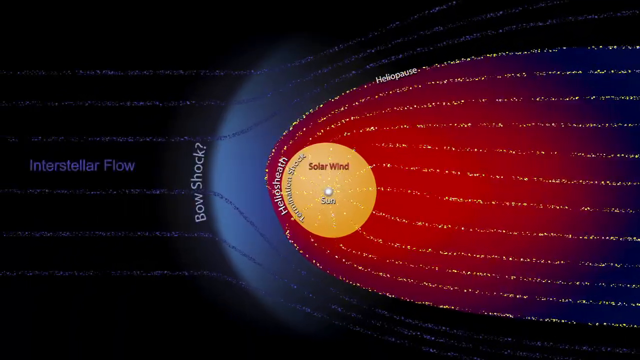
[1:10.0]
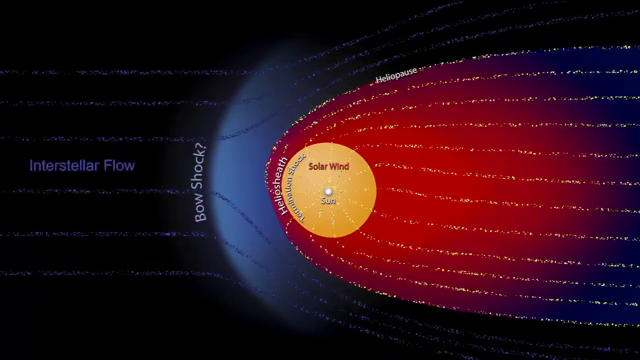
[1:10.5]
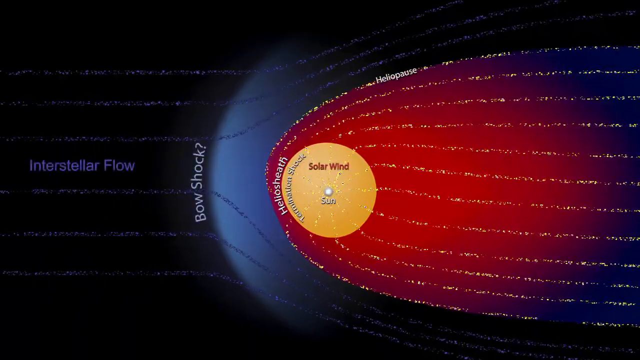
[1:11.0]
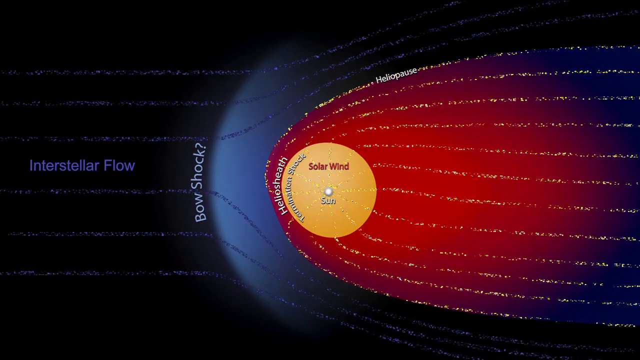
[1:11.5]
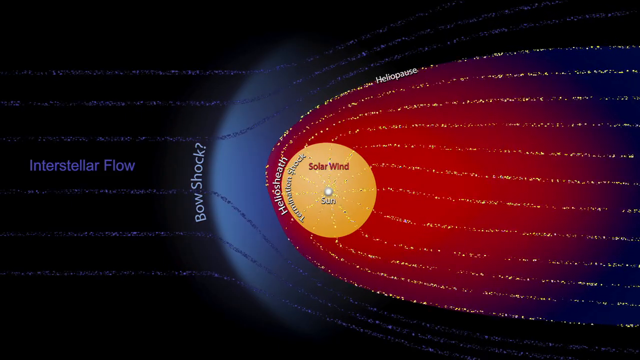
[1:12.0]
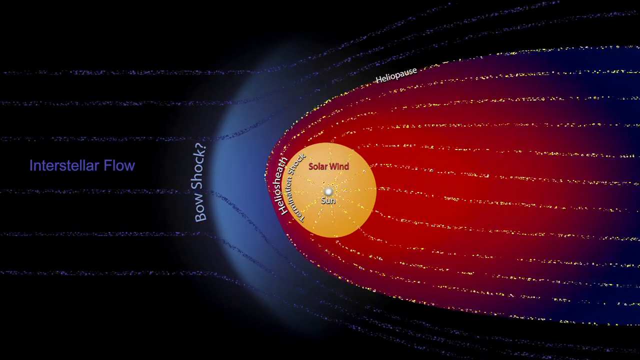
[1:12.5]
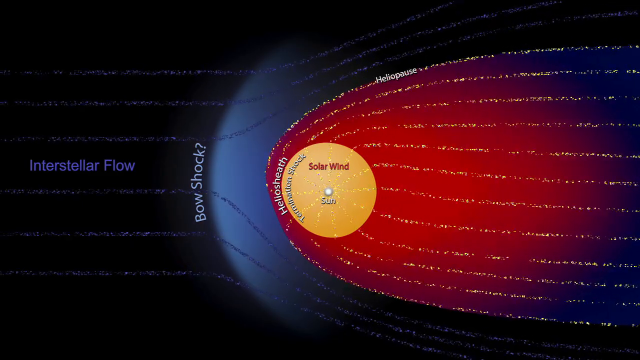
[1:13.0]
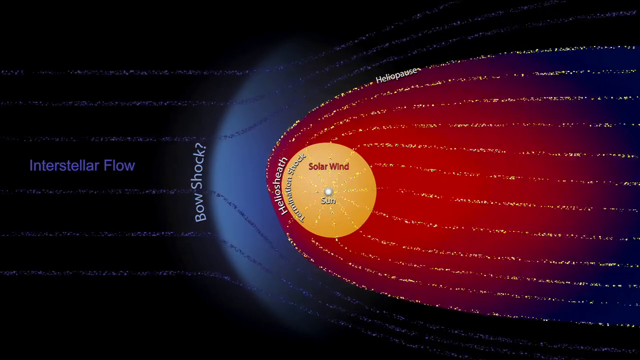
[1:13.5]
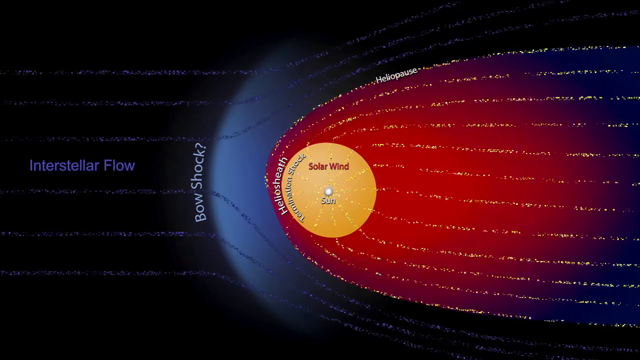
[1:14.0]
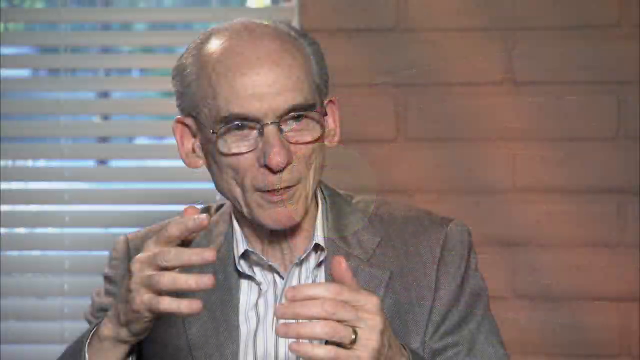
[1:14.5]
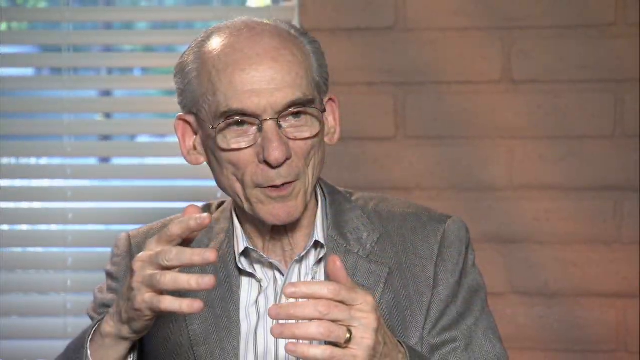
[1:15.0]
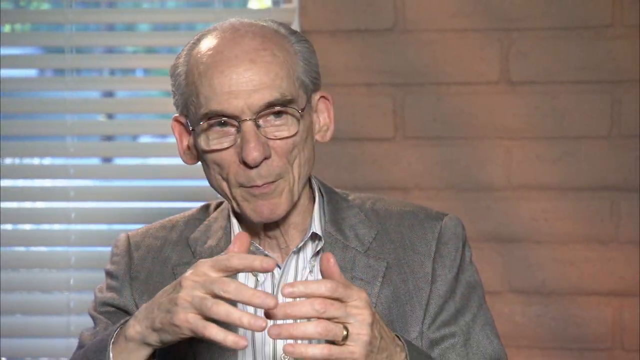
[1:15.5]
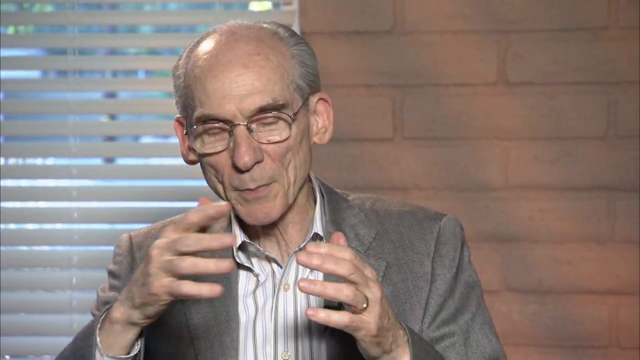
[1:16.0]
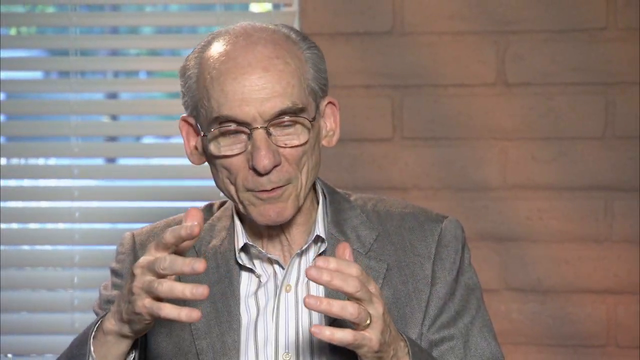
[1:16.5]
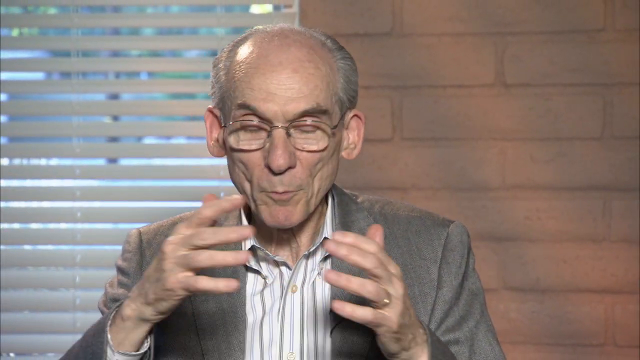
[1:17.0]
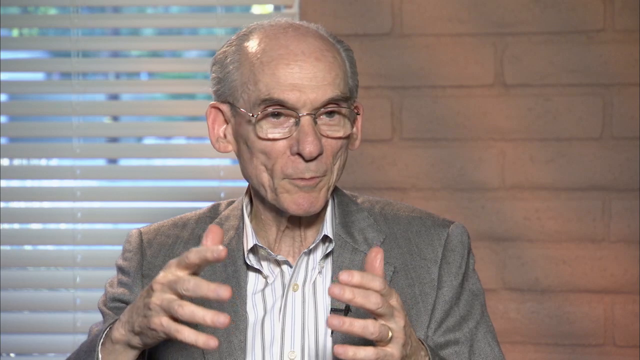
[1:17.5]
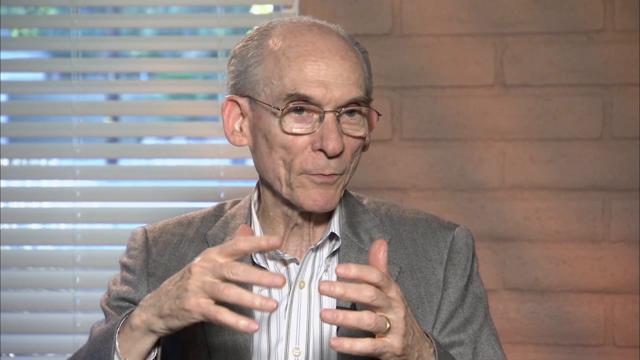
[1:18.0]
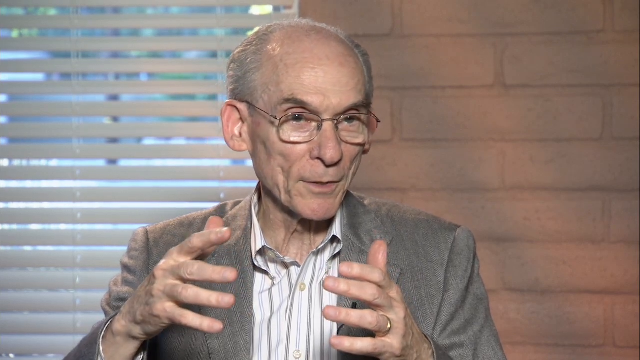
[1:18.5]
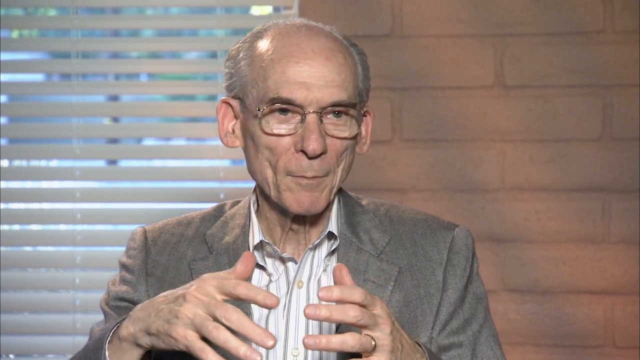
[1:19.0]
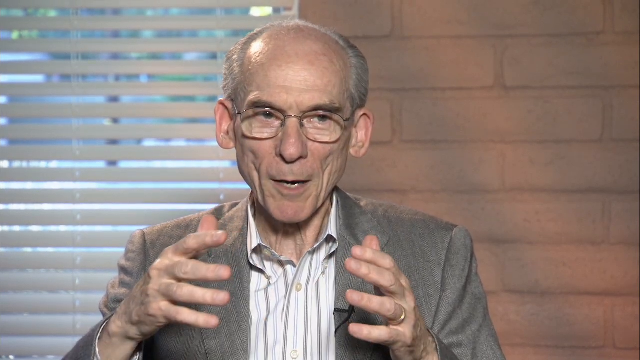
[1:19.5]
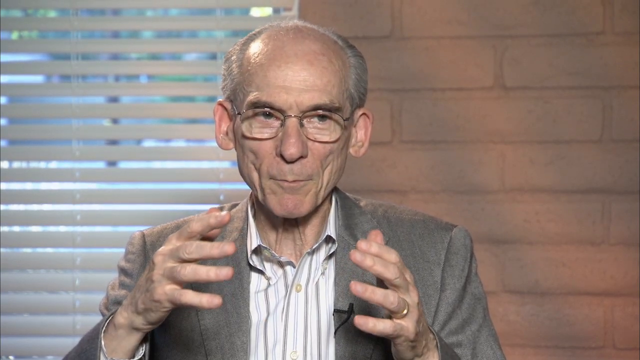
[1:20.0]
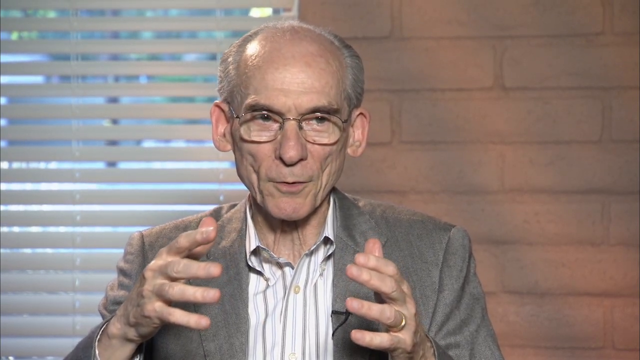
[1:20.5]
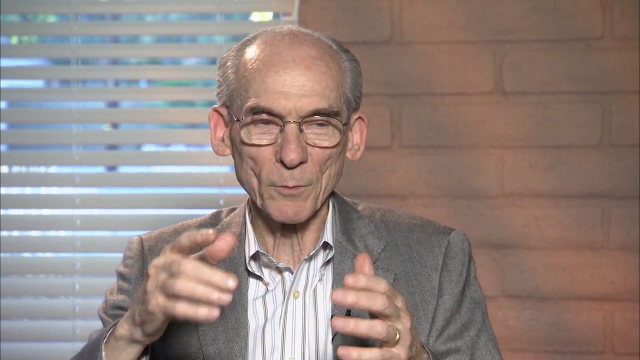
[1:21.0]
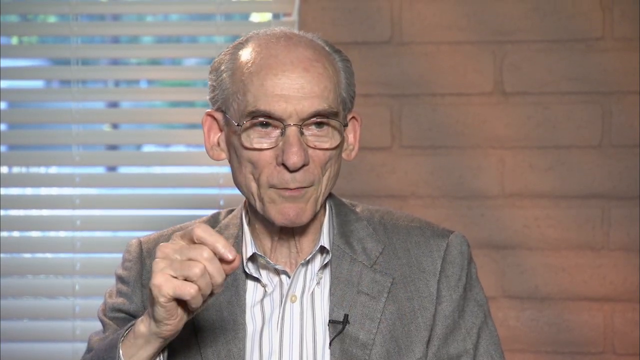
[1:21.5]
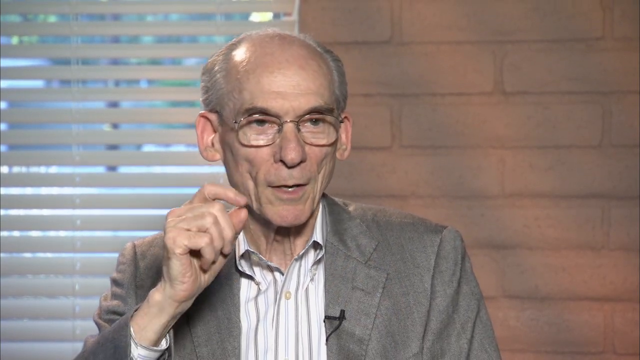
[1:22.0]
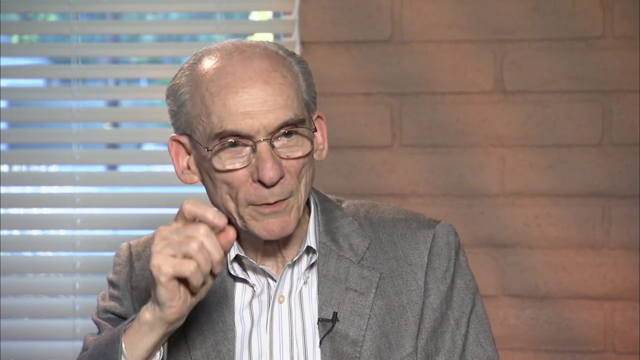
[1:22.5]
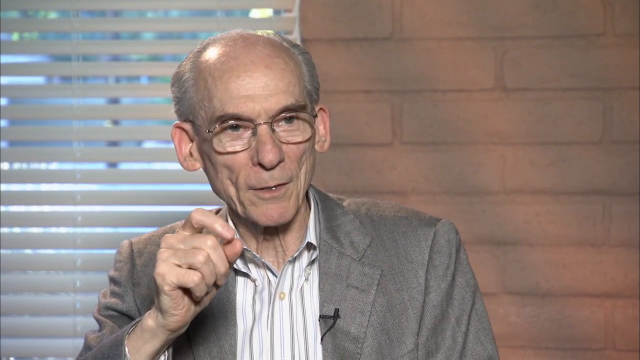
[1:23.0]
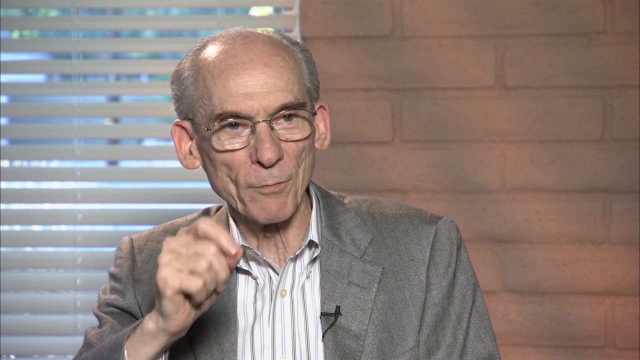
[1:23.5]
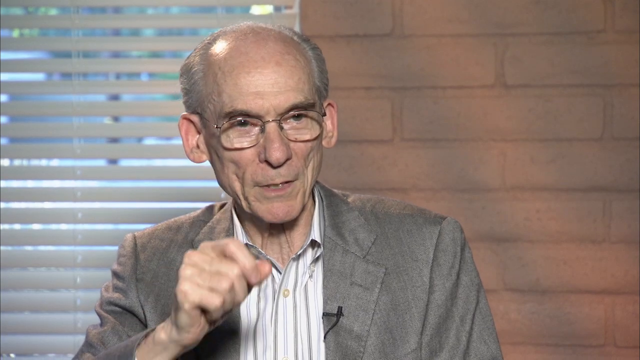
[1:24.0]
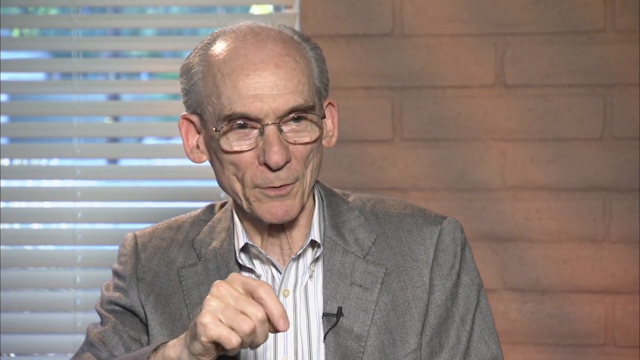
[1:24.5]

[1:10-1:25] A man sits in front of a brick wall and a window with white blinds, with vehicles passing by in the background. He is an elderly white man with glasses, male pattern baldness and gray hair, and he wears a wedding ring on his ring finger. He has a gray outer shirt, like a formal shirt, over an undershirt with white and gray vertical stripes, and a black microphone is attached to his shirt. Another part of the video shows a diagram of a sun, like in the solar system, with the text "bow shock interstellar flow" and the sun labeled. Horizontal lines show the trajectory of the sun moving through space.